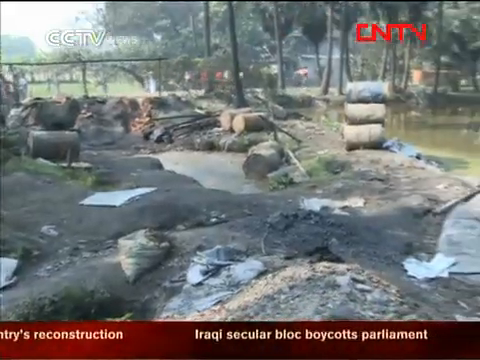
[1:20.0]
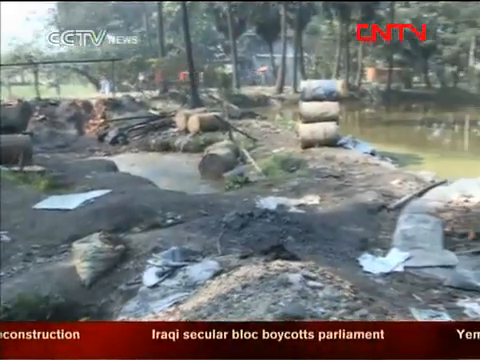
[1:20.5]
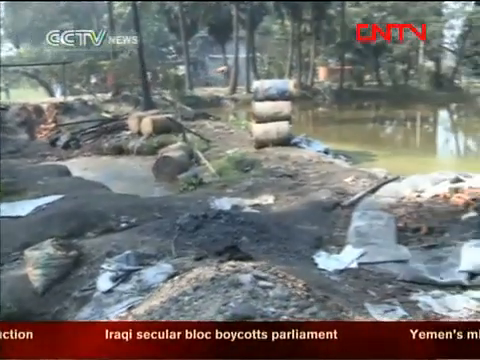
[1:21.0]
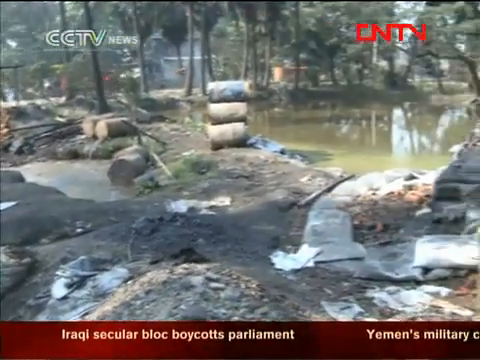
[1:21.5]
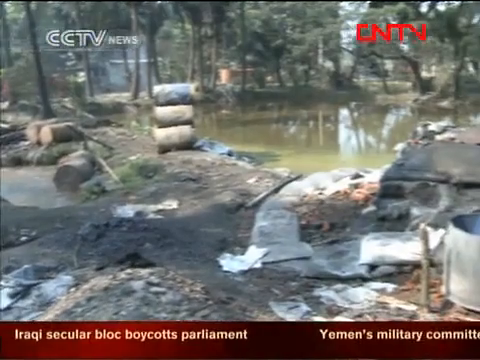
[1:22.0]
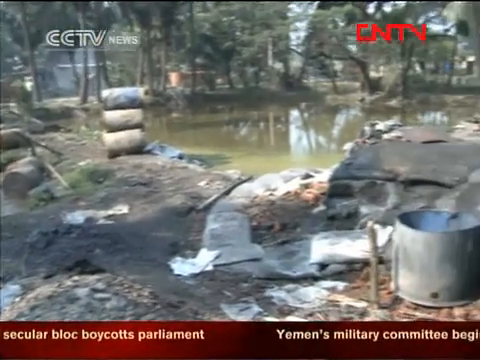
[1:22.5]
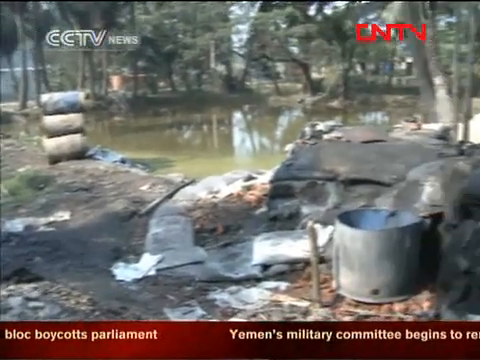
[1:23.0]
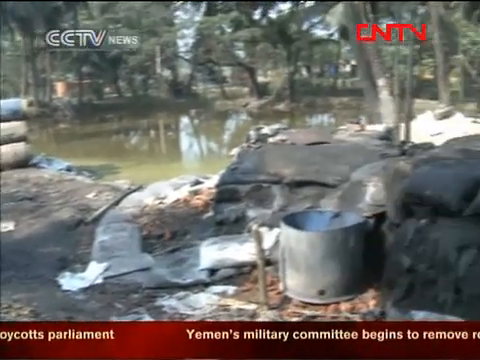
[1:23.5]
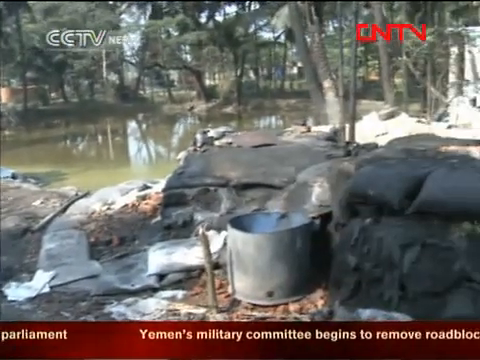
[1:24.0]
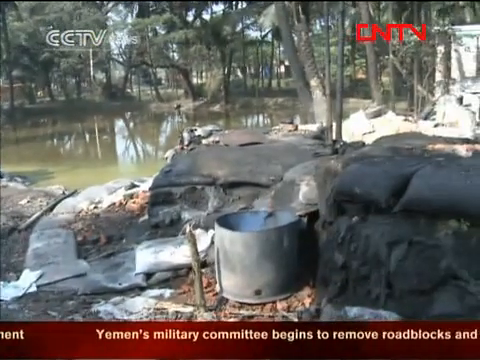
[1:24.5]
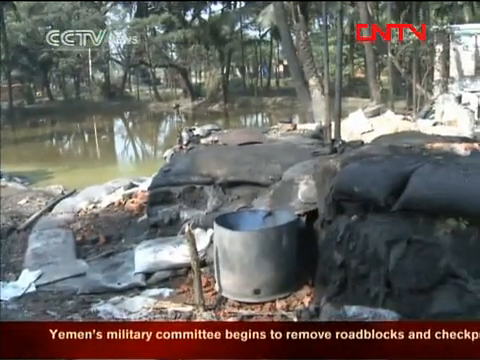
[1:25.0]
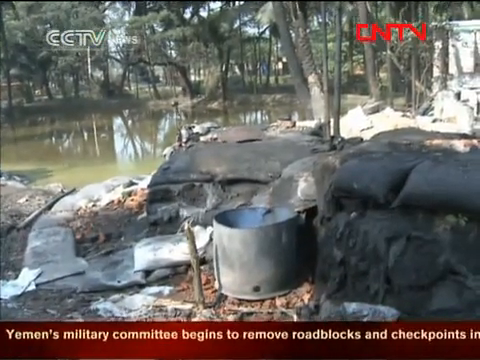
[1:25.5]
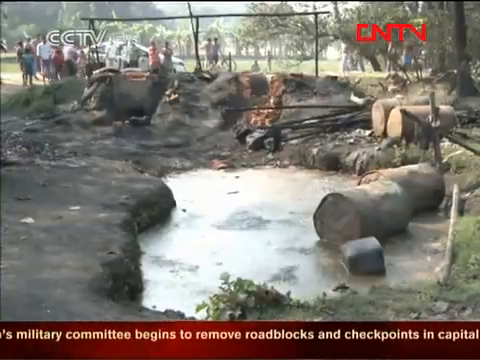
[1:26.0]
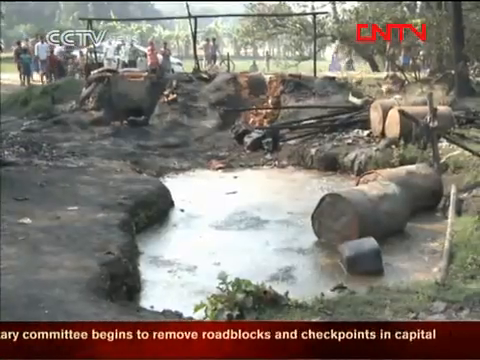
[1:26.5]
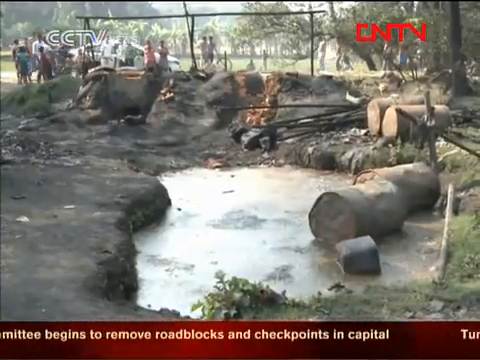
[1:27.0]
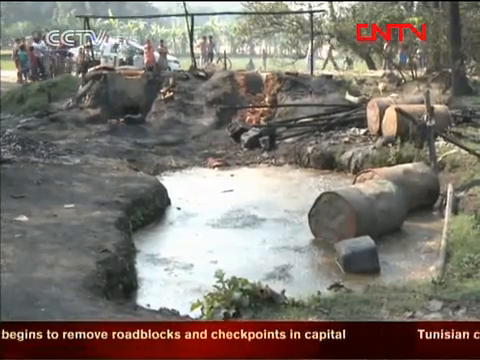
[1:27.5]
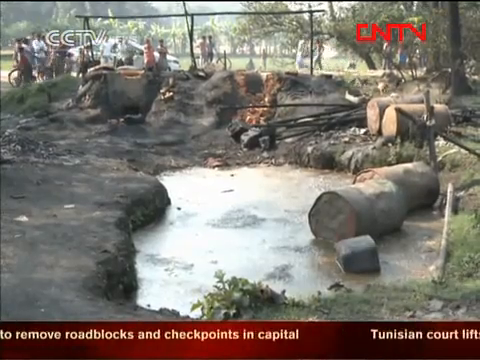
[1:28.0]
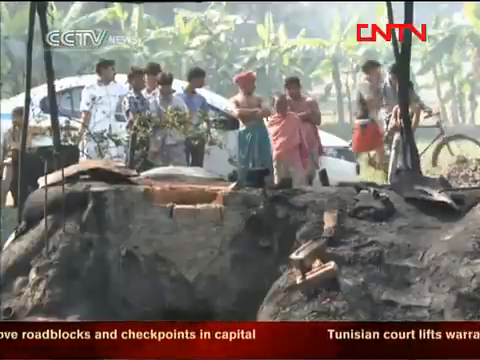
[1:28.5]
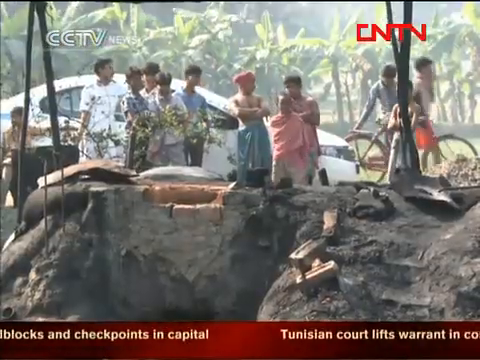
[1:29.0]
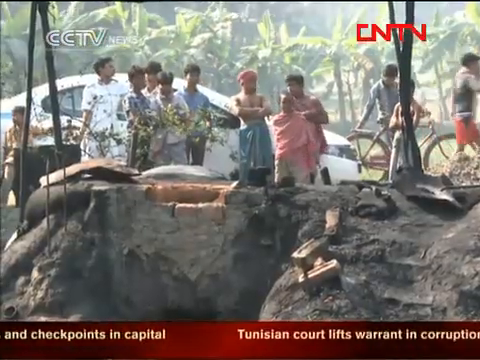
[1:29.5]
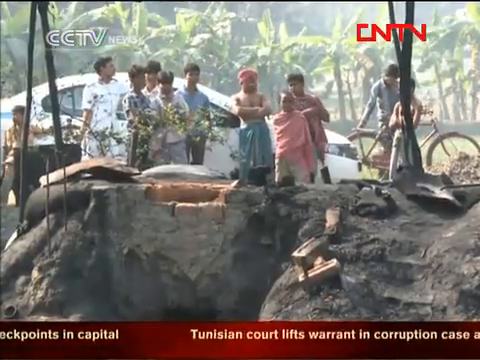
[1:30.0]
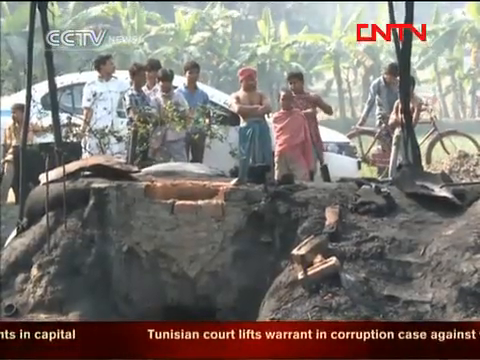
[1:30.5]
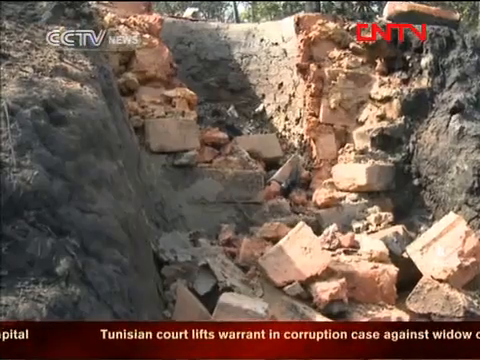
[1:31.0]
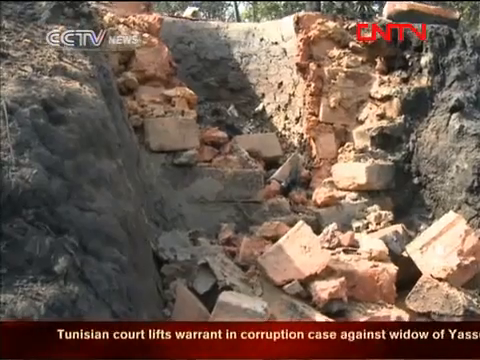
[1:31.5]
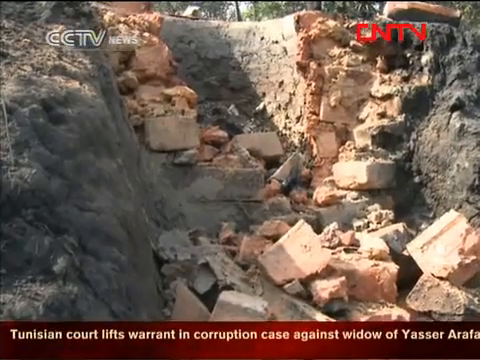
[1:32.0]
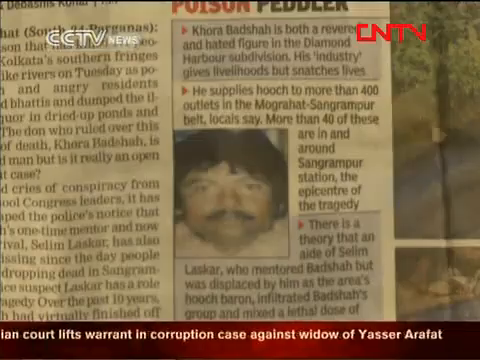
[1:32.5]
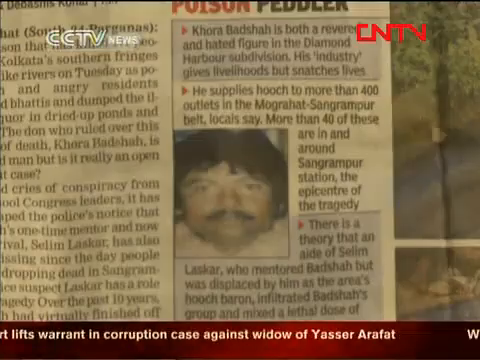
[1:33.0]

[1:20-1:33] Footage that appears to repeat earlier footage pans across the whole area, showing two ponds: the first is dried up, and the second still has water, though its water level is almost depleted. There are many sandbags and barrels, some with lids and some without. The area is full of trees, and on a dirt road up ahead locals are huddled together watching. Another shot shows the collapsed wall or well; a good portion of it has been destroyed, and the clay bricks lie on the ground in a very deep ravine.